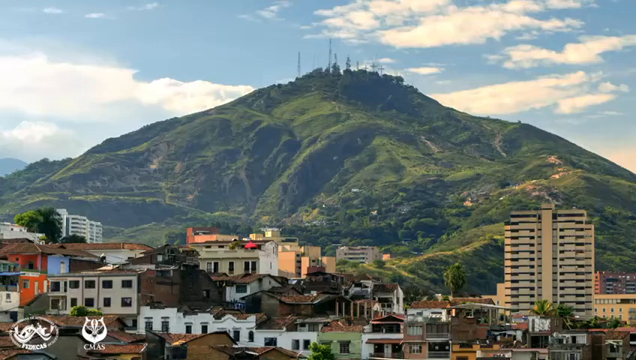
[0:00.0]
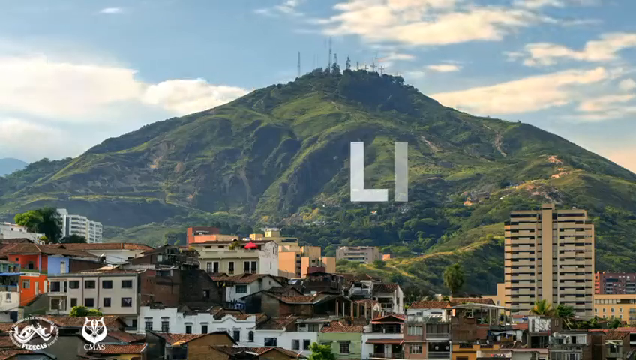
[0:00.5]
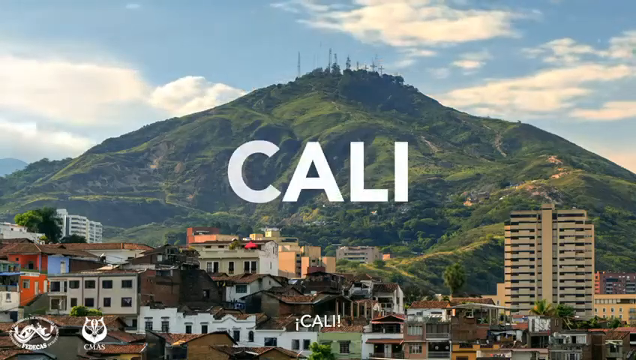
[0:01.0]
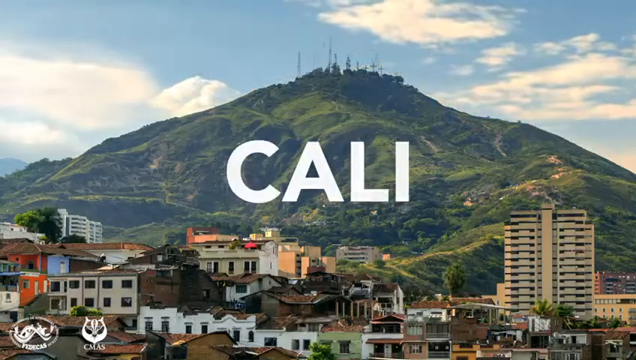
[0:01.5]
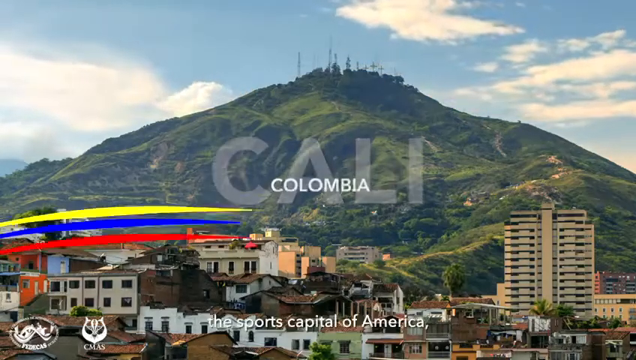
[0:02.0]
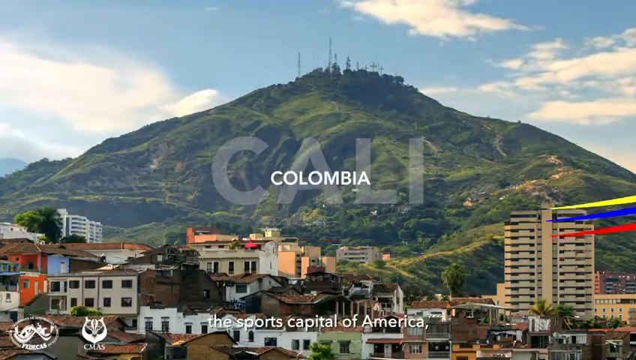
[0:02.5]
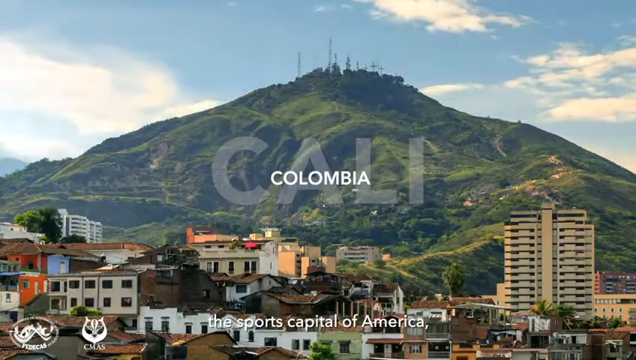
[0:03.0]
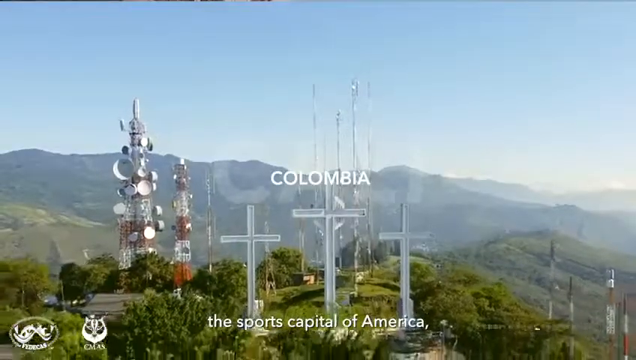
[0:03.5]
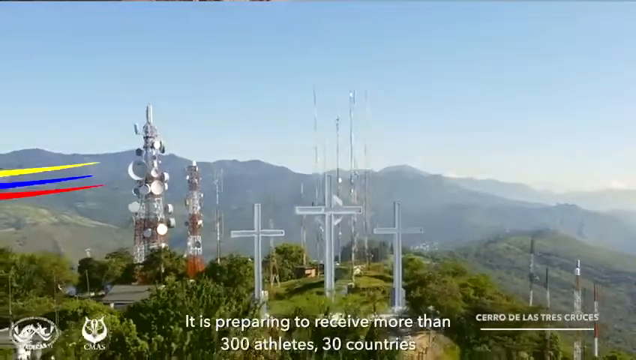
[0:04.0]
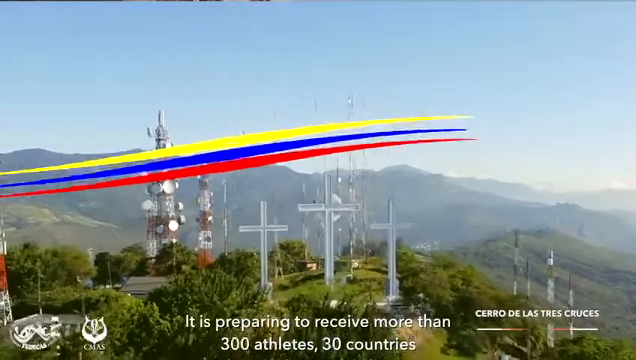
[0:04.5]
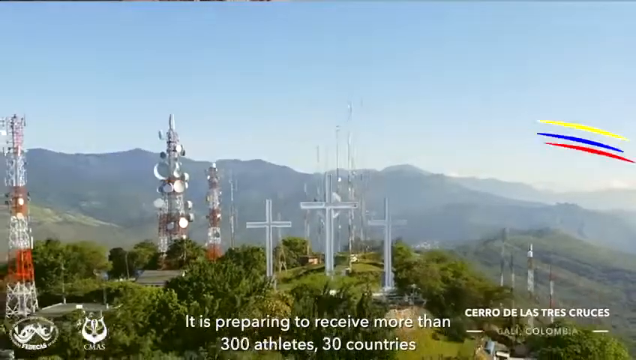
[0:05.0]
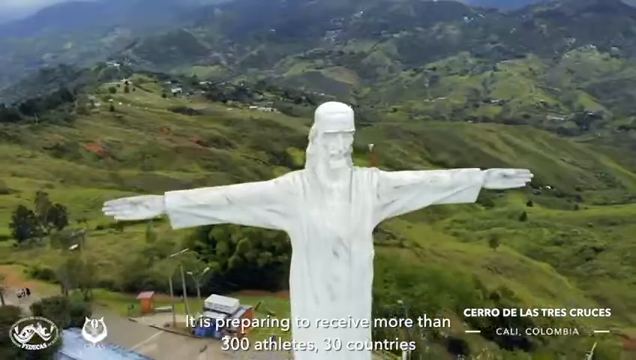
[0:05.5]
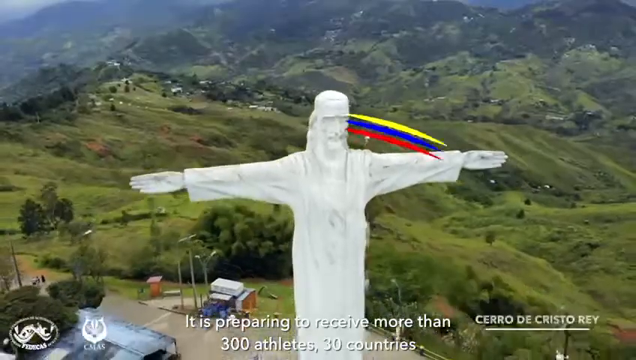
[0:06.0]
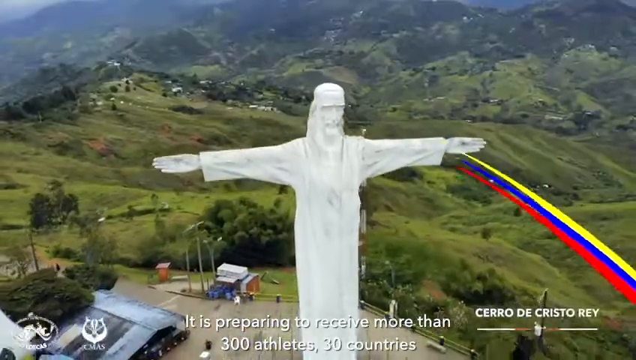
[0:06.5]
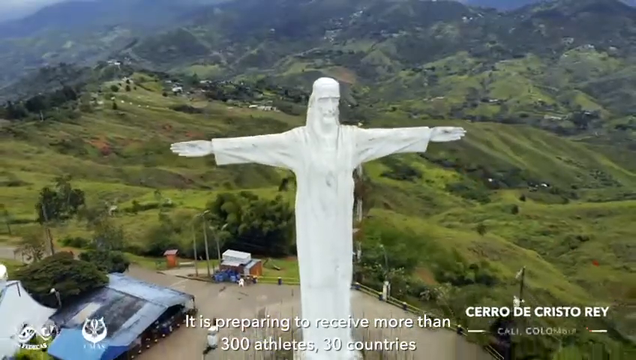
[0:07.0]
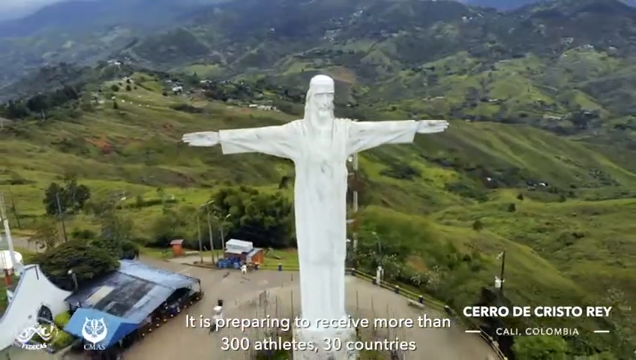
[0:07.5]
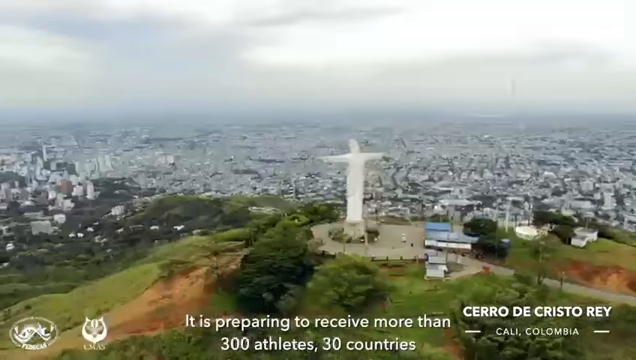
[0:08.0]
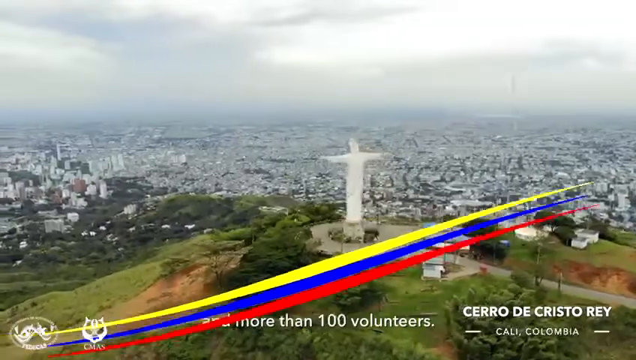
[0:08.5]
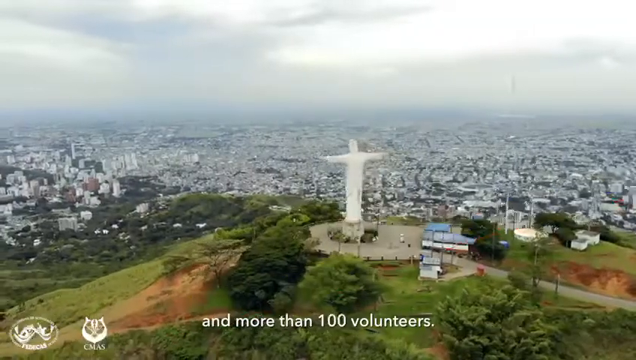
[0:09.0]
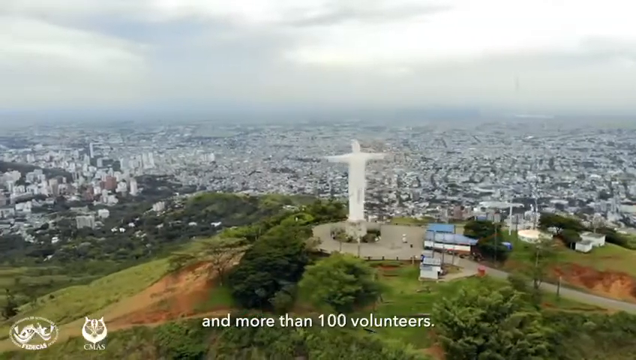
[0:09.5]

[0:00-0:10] The word "Cali" appears at the beginning, and subtitles read "the sports capital of America is preparing to receive more than 300 athletes, 30 countries." The images show Columbia, including a statue, apparently of Christ, a big figure standing with its arms out overlooking the city.